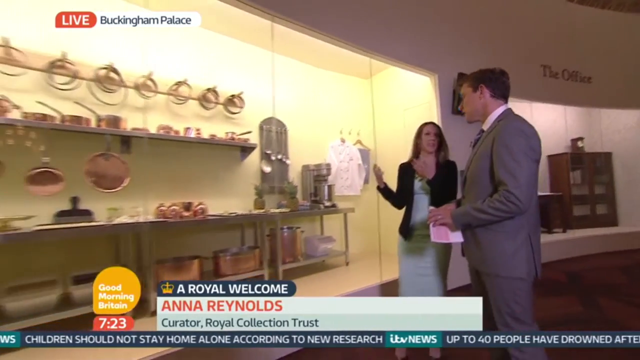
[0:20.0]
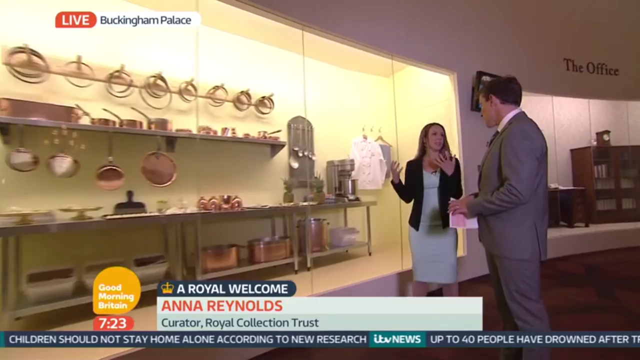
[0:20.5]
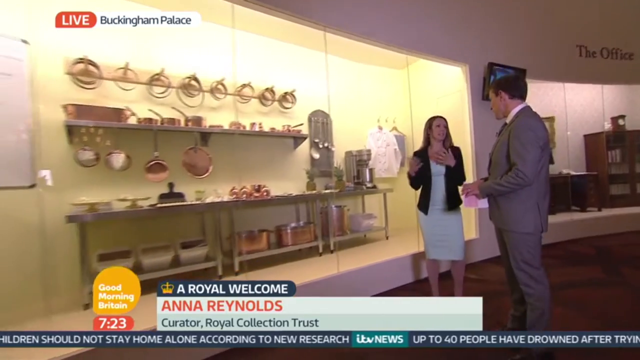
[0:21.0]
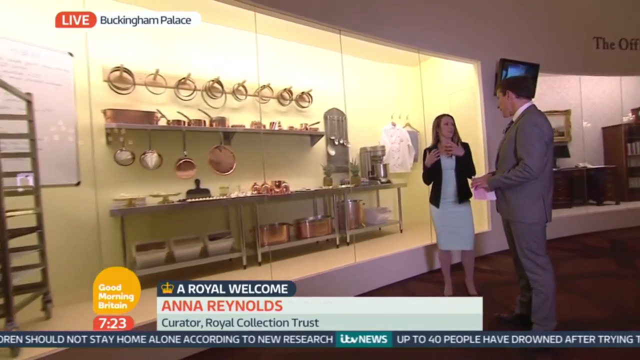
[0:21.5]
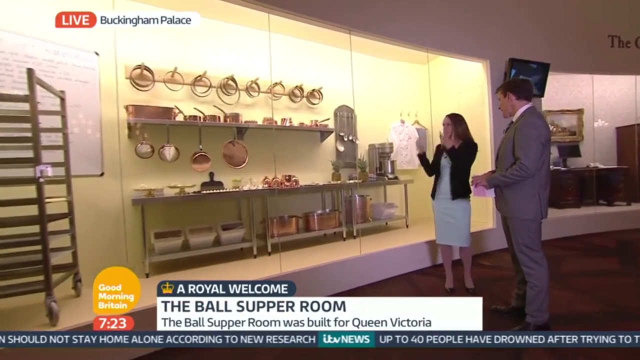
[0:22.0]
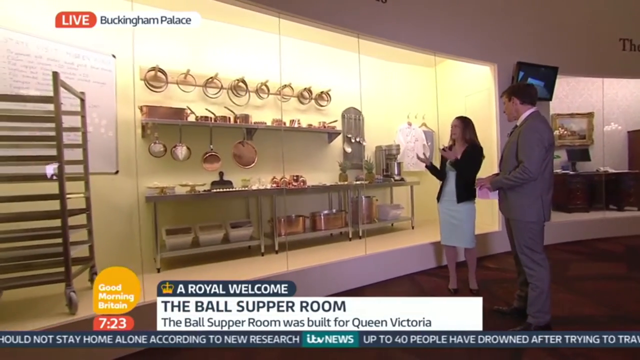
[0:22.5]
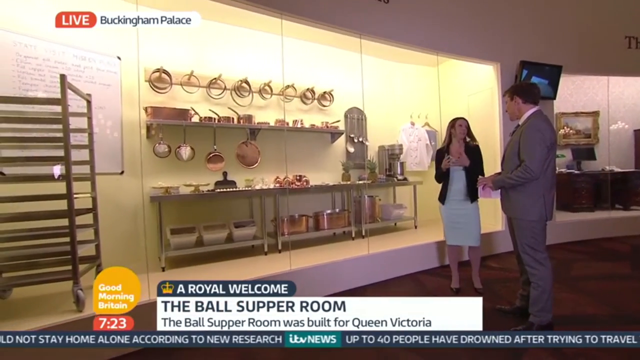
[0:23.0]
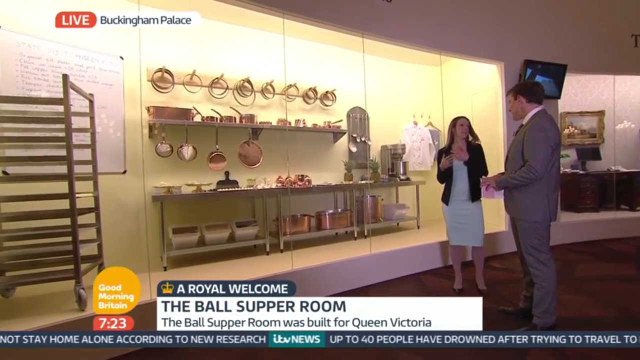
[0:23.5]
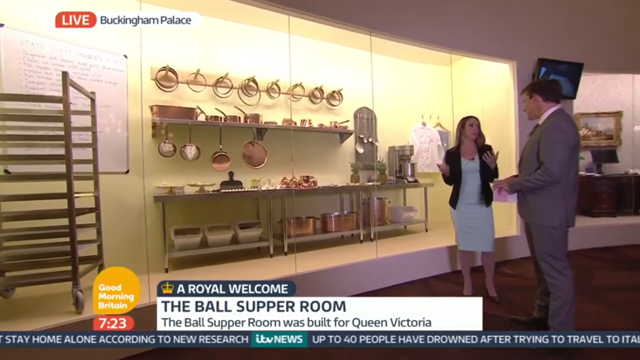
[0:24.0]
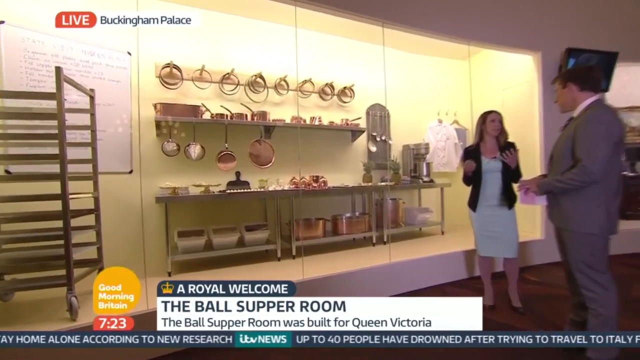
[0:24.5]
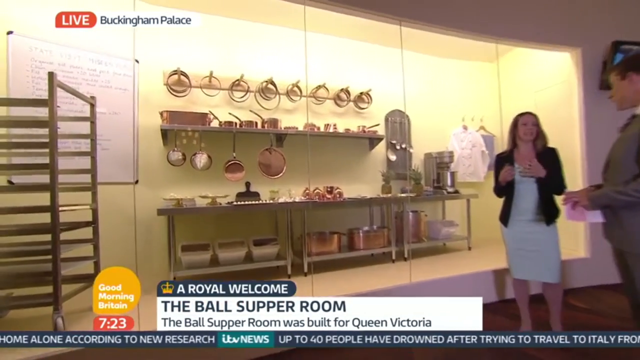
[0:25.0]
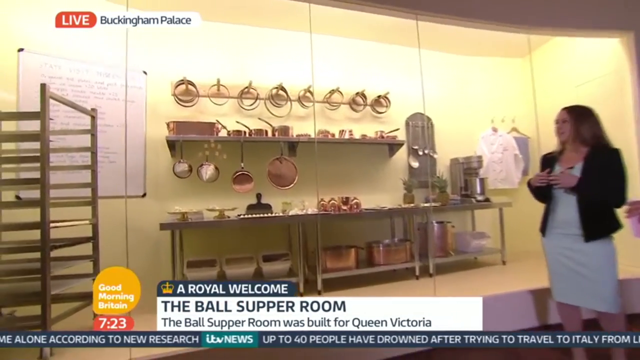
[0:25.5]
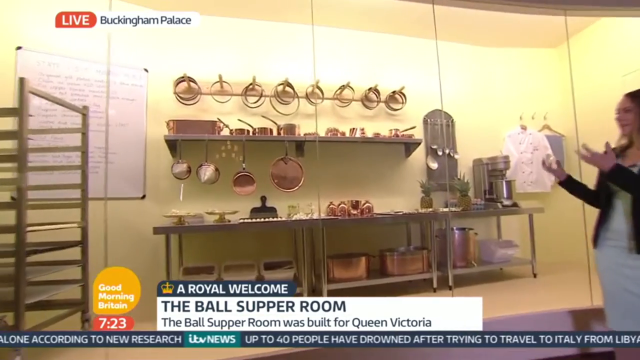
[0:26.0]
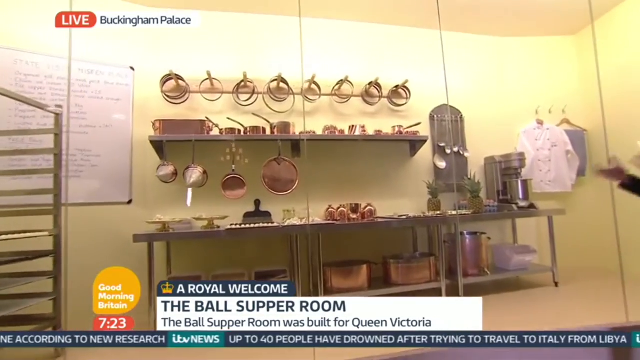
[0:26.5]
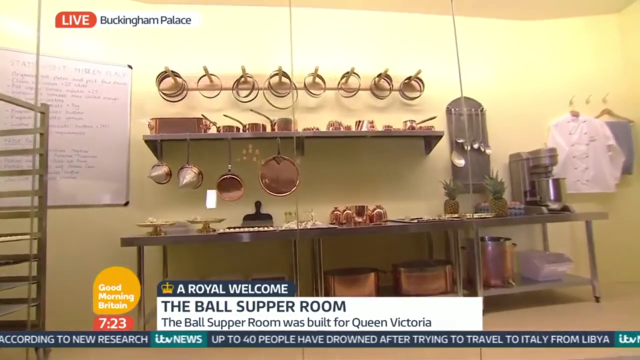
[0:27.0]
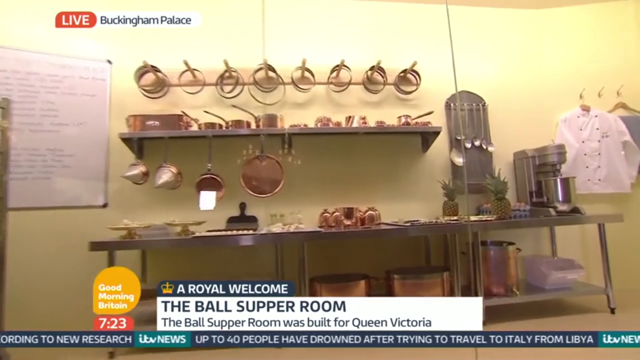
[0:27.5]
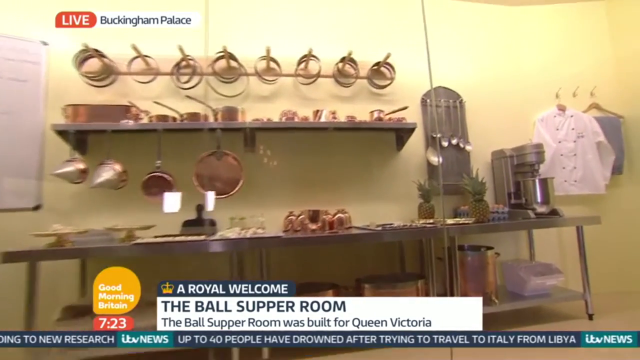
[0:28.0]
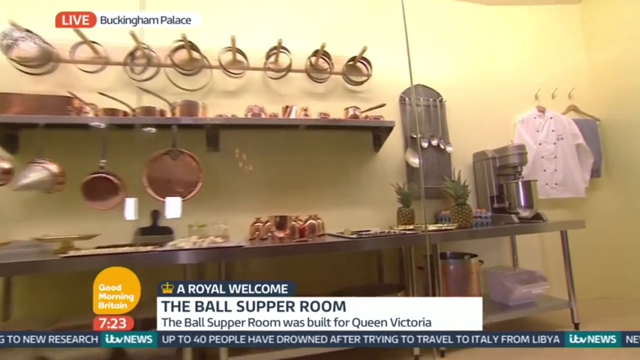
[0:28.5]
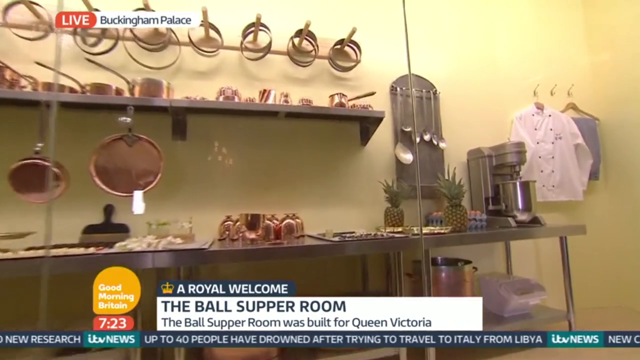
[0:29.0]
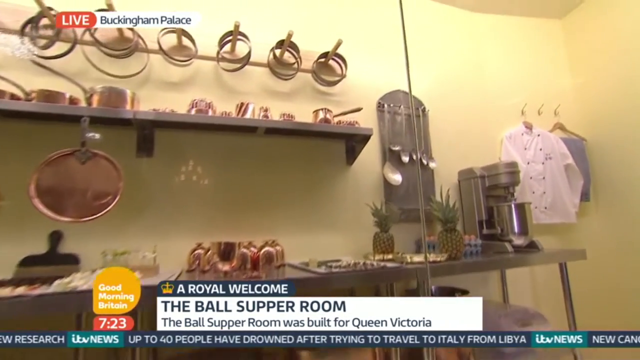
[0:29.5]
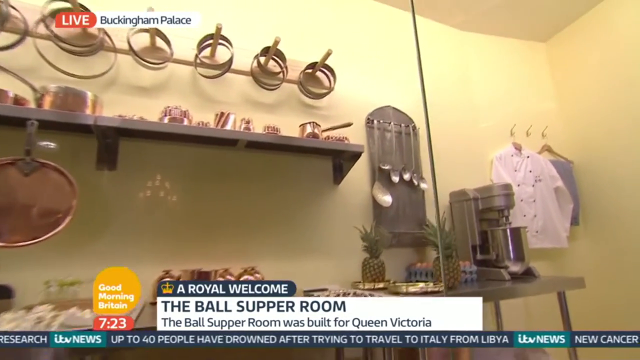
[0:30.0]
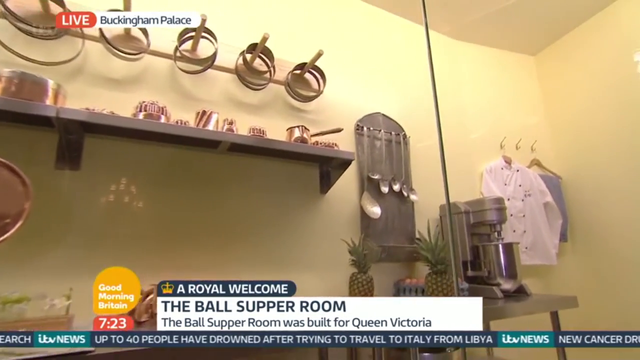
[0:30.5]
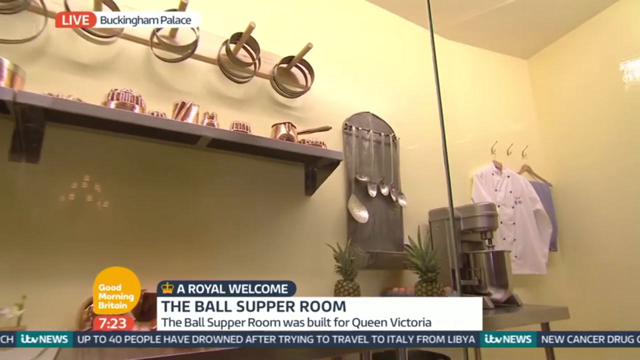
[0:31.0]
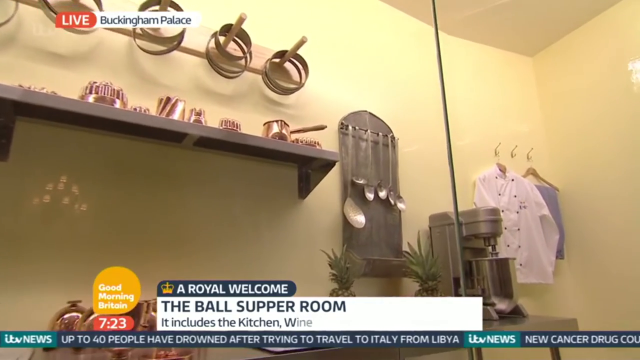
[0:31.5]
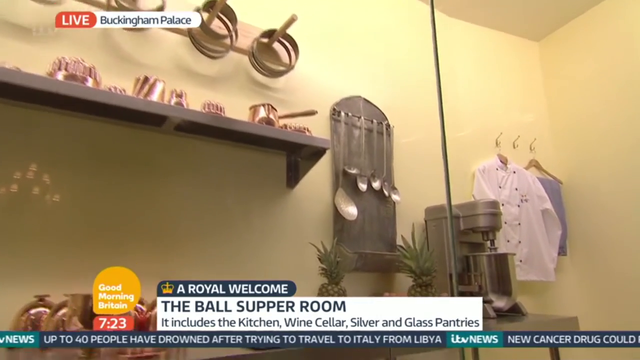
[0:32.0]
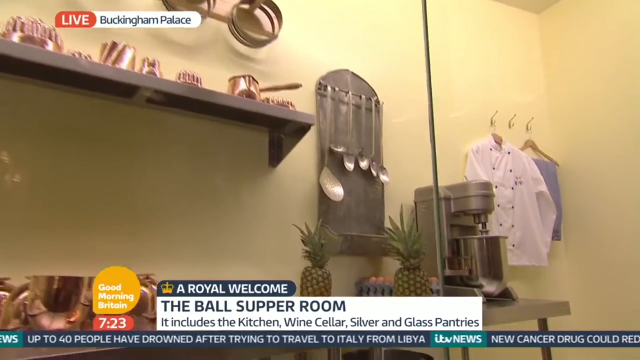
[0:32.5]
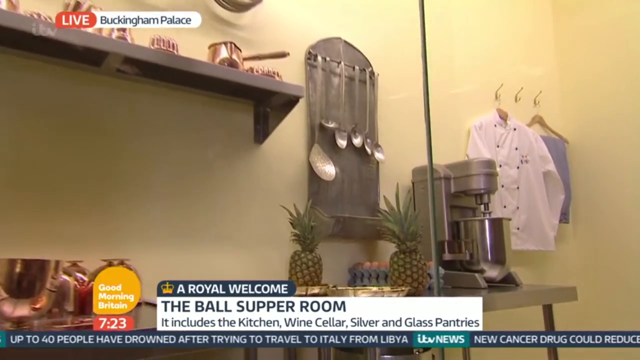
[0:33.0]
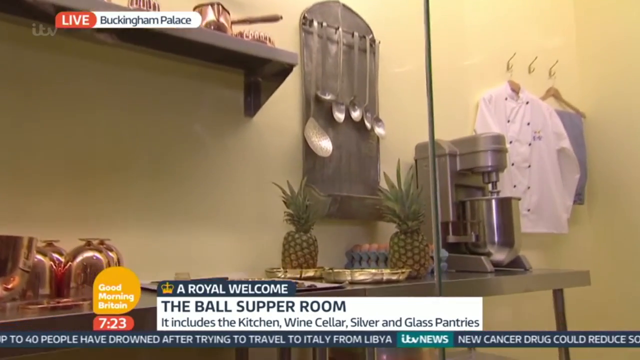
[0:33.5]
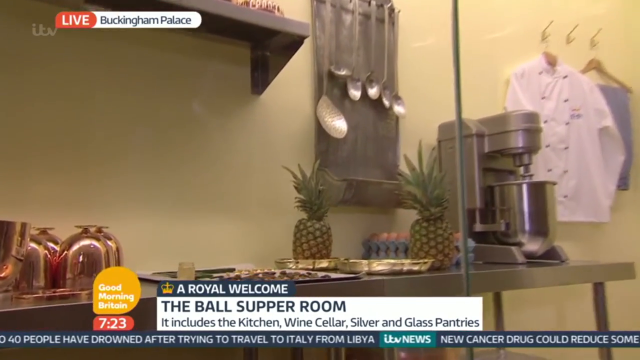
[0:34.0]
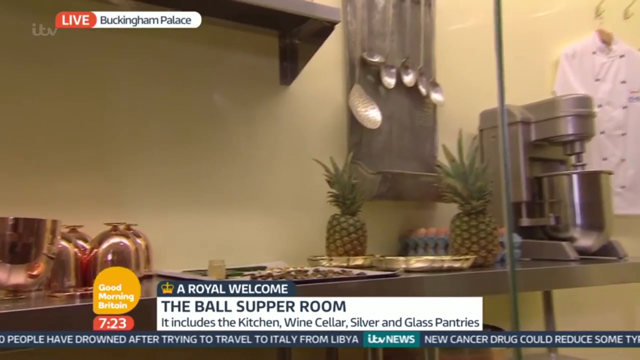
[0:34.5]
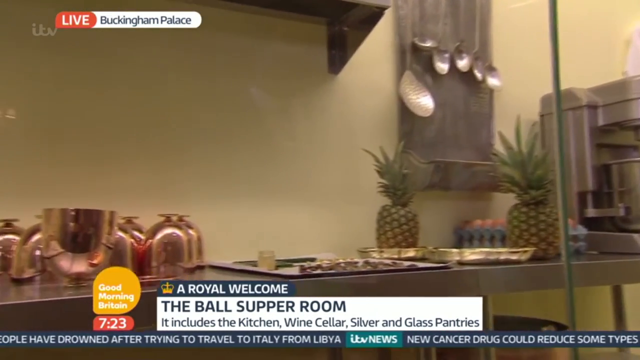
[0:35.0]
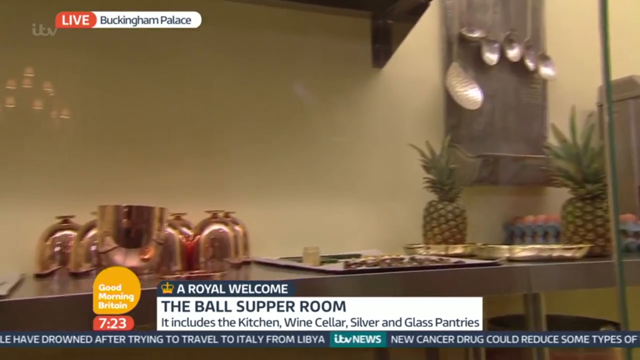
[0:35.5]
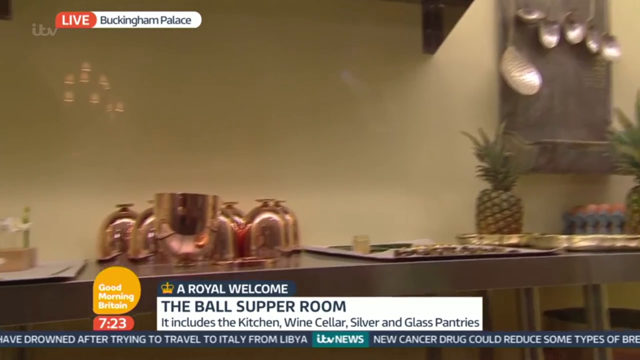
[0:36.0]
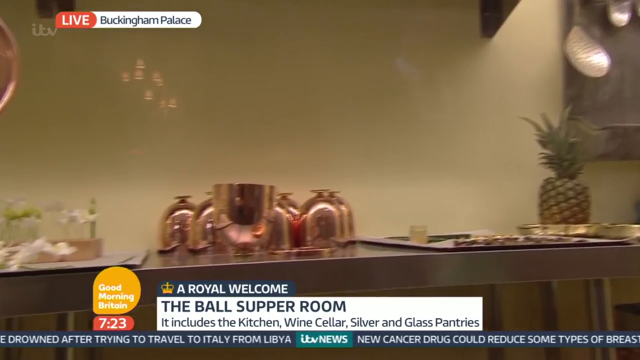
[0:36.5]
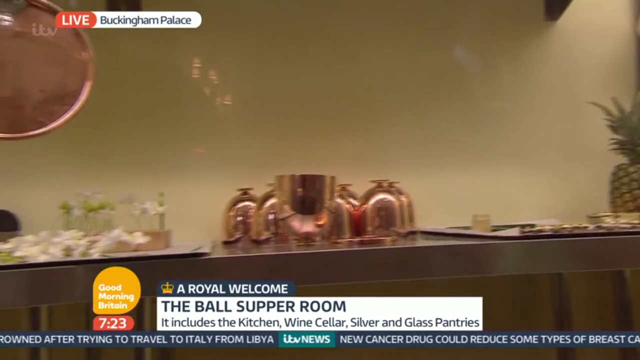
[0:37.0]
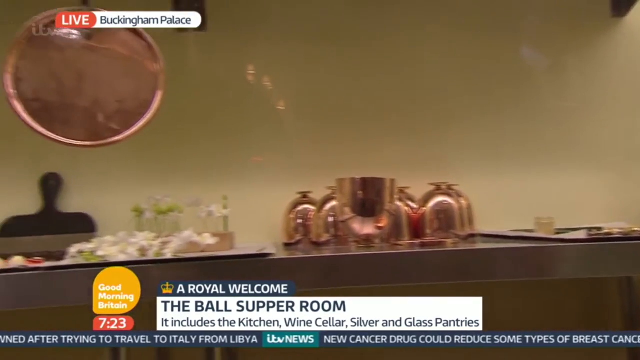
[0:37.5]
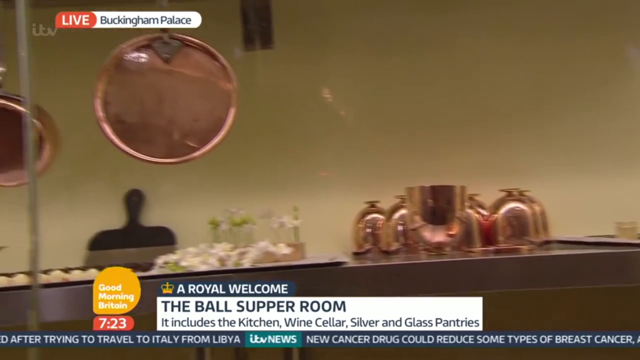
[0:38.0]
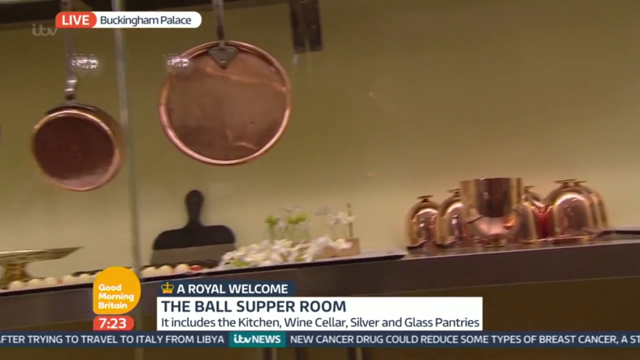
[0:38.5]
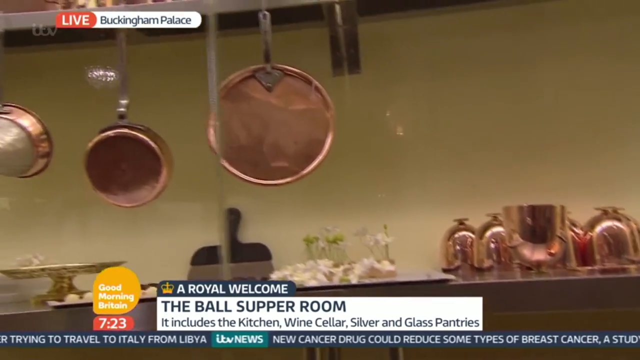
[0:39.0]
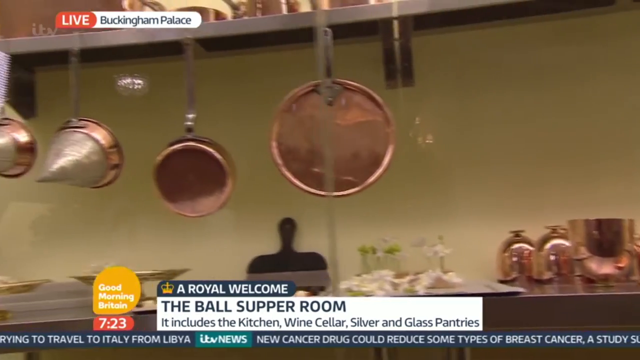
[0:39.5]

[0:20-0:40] The Good Morning Britain segment continues. In the bottom left is an orange bubble with the words "Good Morning Britain", and below it a red bubble with the time "7:23". To the right is a graphic: a white rectangle with the name "Anna Reynolds" in red and, below it, "Curator Royal Collection Trust" in blue. Above the name is a blue curved rectangle about half the size of the white one, with a drawing of the British crown on its left side and the words "A Royal Welcome" to the right. A man stands on the right and a woman on the left in front of a museum exhibit. Behind the exhibit's glass is a kitchen setup: a large, long metal table with pots and pans beneath it on a shelf, pans hanging from a shelf on the wall above the table, and, at the top of the wall, multiple pegs each with metal rings around it. The man wears a gray suit and white shirt and looks to be in his 30s. He talks to the woman on his left, who wears a white dress with a black coat over it. He holds a white card in his left hand and clasps his hands in front of him. As the woman talks, she holds her hands up at her lower neck area, slightly rolling them over, then turns around and gestures to the kitchen exhibit behind them, brings her hand back near her chest, spreads her hands wide with palms up, and brings them back up toward her chest. A close-up of the kitchen follows: on the right a white chef's coat hangs on the wall with blue pants hanging to its right; to the left of the coat a number of metal spoons hang on a gray background. There is a metal mixer with pineapples to its left. The camera zooms in on the metal shelf area and moves from the mixer on the right to the left, showing bronze containers and bronze pans hanging from a shelf above the long metal table.